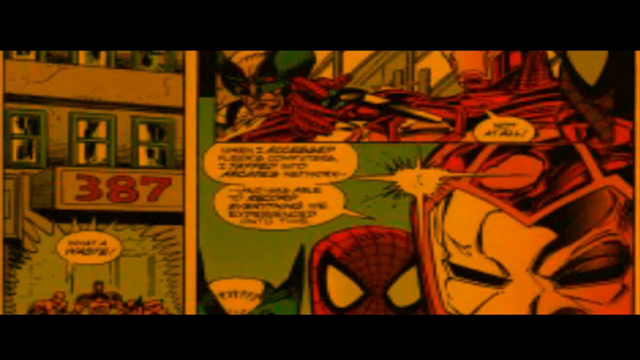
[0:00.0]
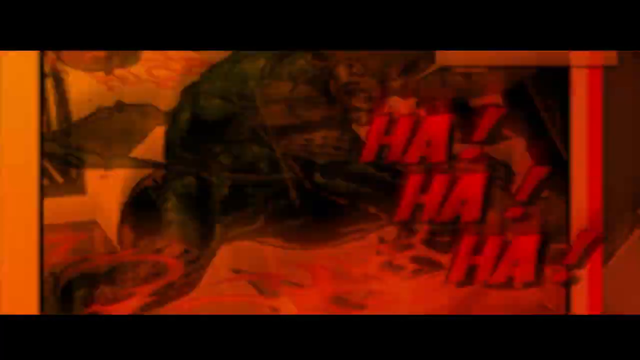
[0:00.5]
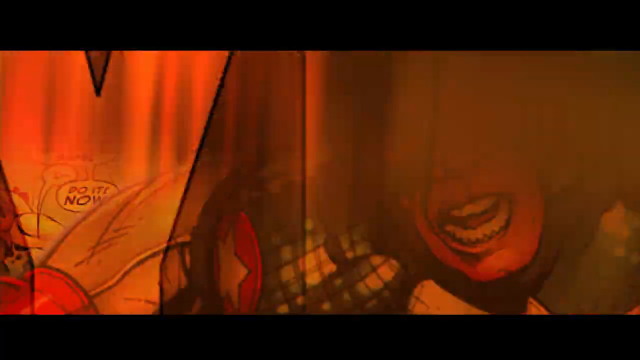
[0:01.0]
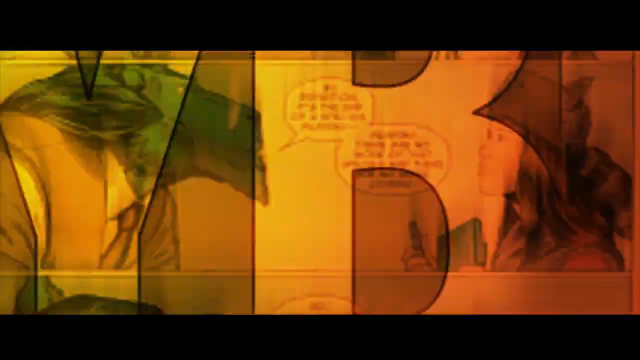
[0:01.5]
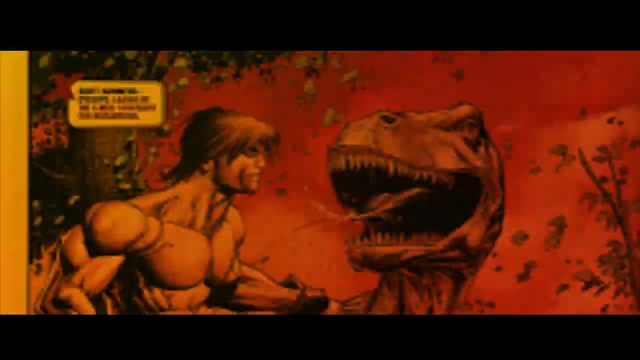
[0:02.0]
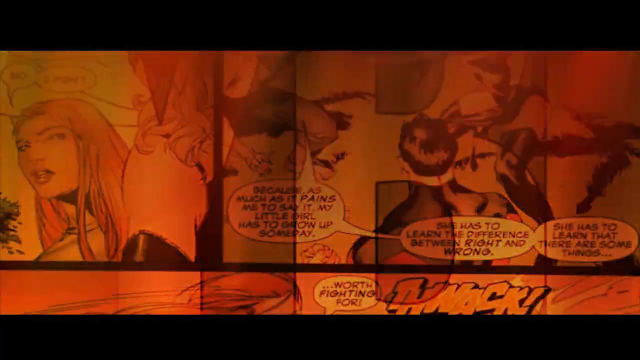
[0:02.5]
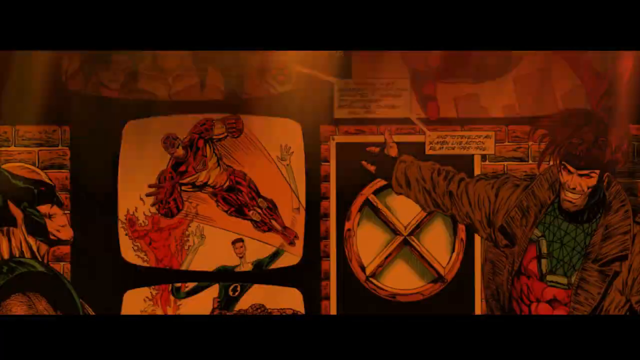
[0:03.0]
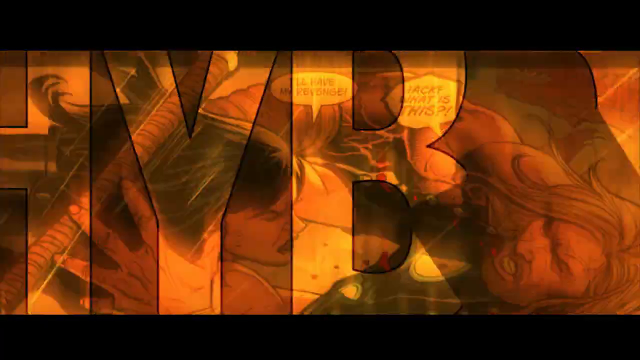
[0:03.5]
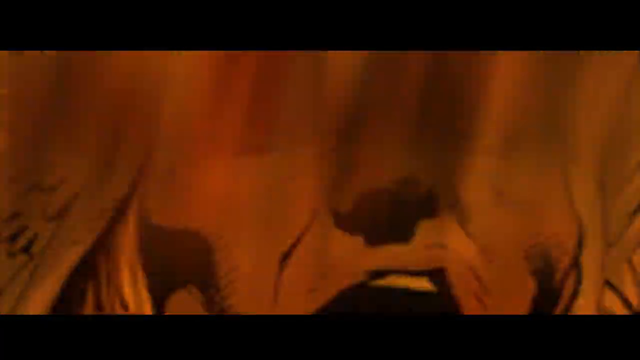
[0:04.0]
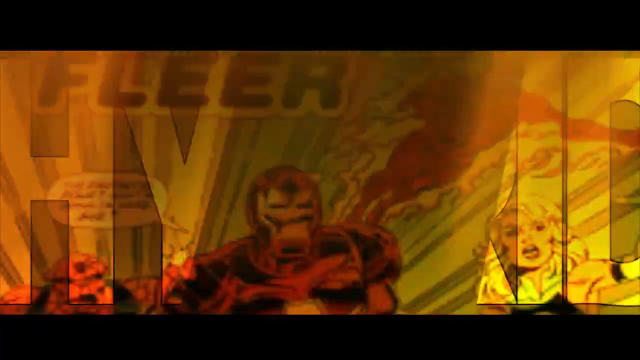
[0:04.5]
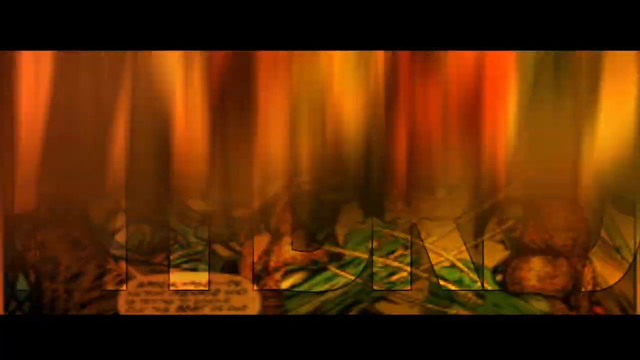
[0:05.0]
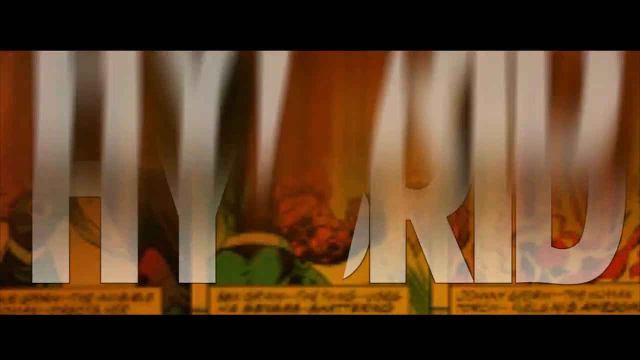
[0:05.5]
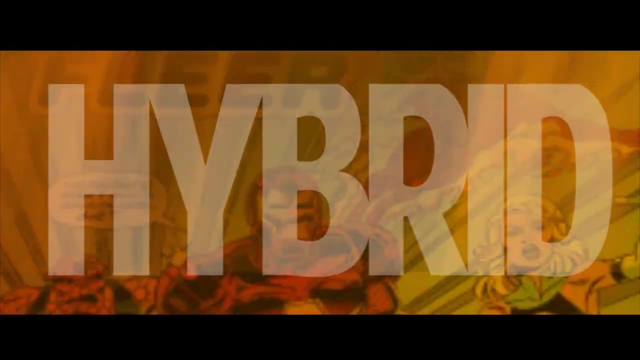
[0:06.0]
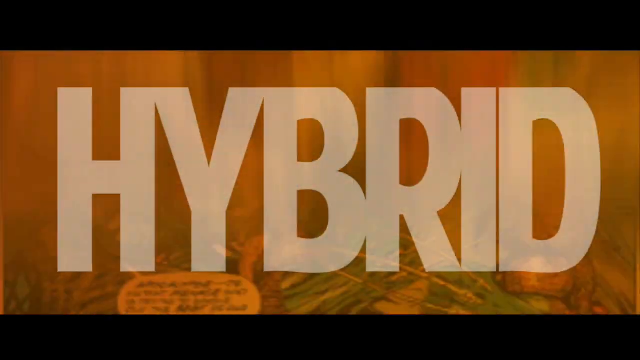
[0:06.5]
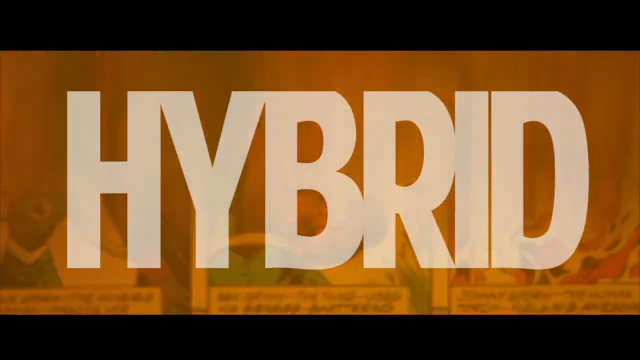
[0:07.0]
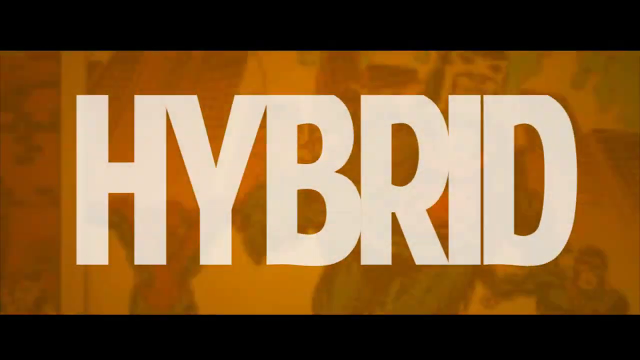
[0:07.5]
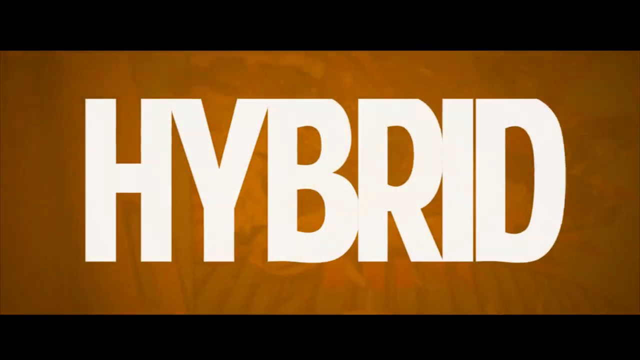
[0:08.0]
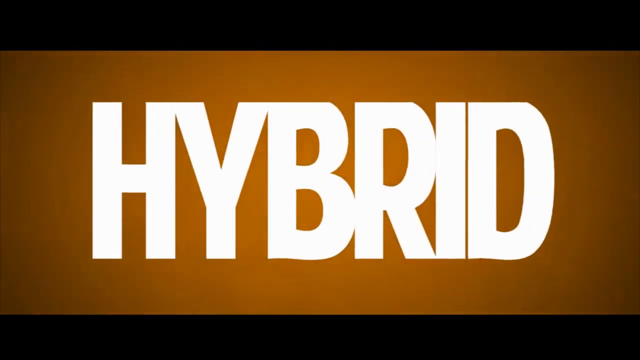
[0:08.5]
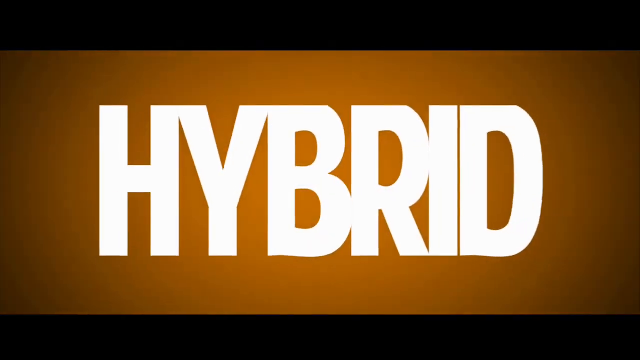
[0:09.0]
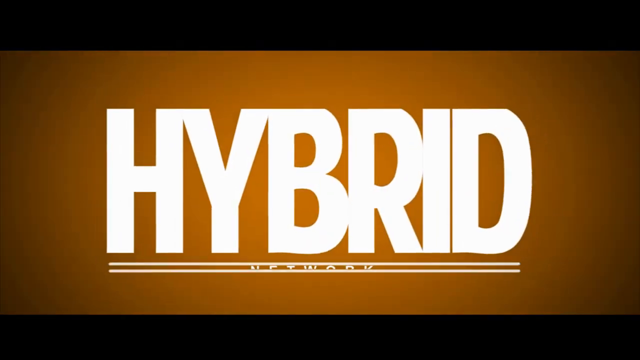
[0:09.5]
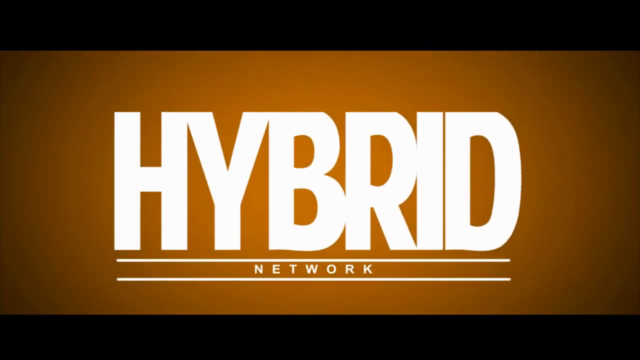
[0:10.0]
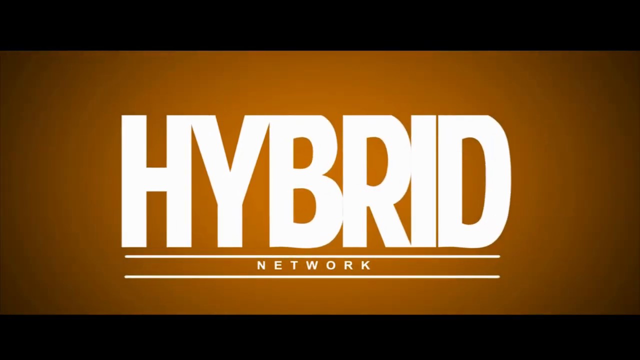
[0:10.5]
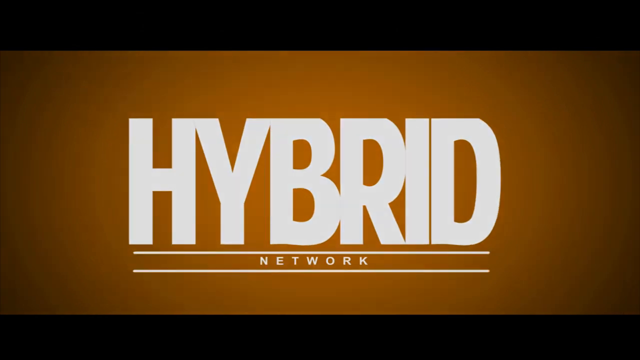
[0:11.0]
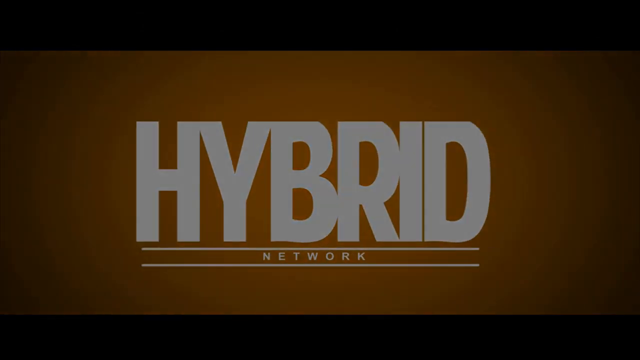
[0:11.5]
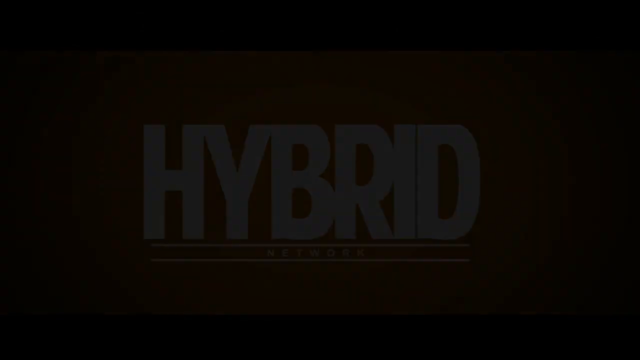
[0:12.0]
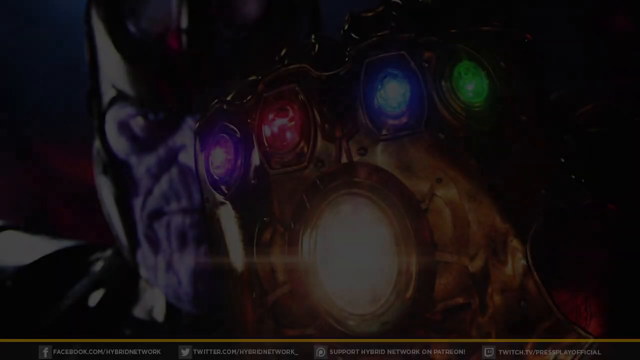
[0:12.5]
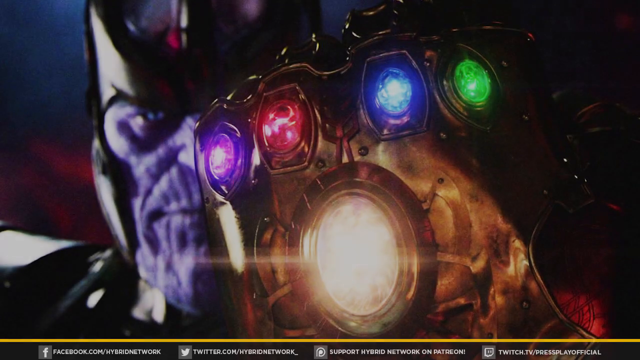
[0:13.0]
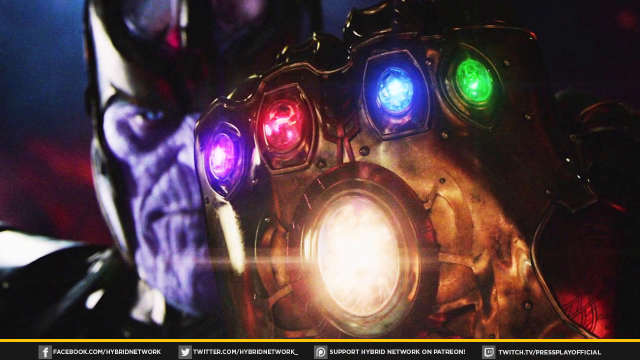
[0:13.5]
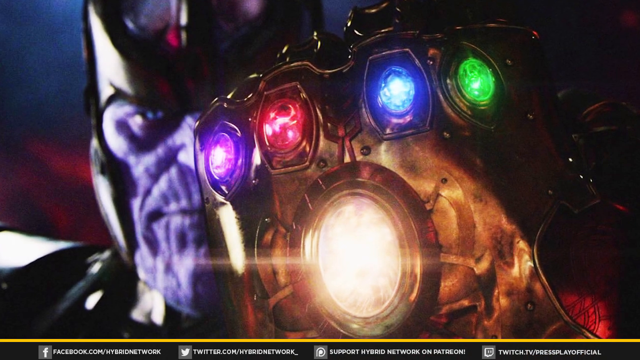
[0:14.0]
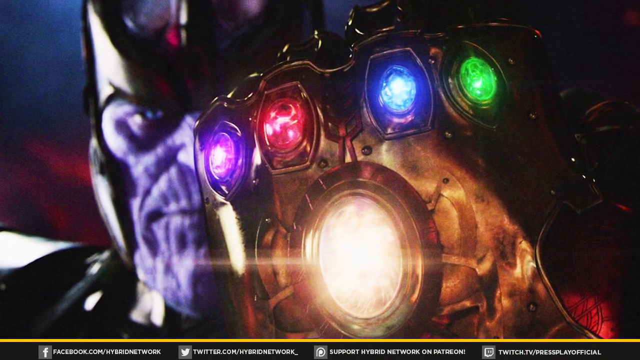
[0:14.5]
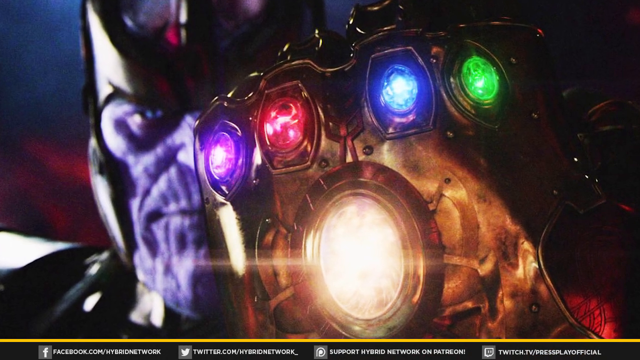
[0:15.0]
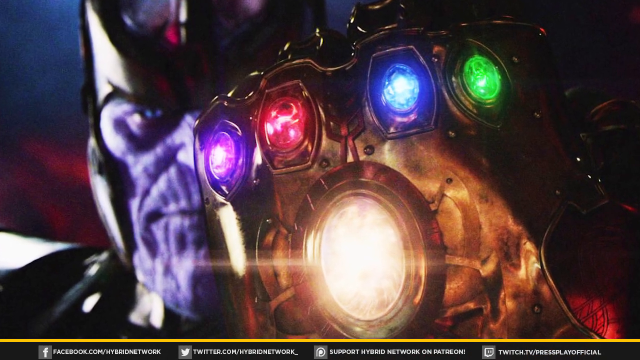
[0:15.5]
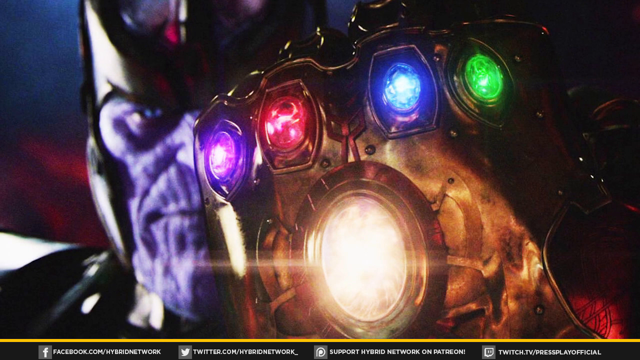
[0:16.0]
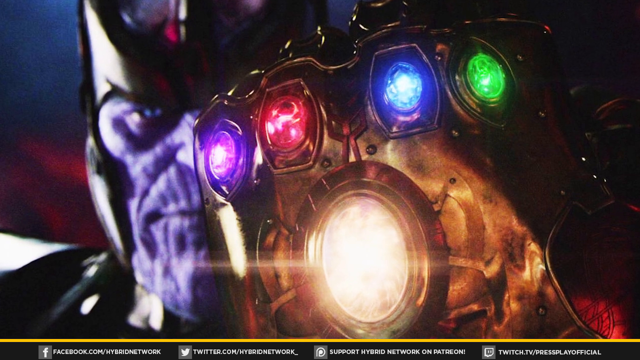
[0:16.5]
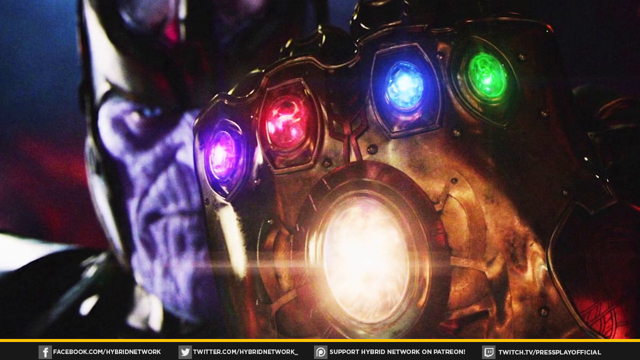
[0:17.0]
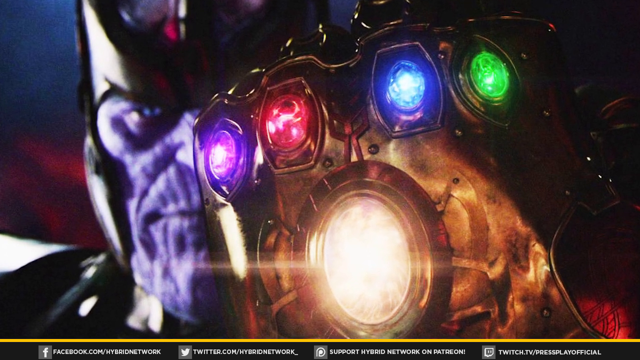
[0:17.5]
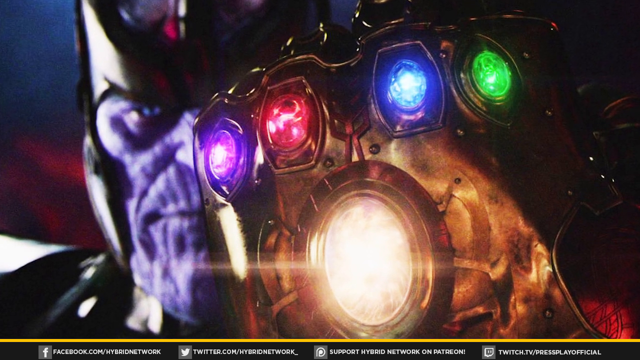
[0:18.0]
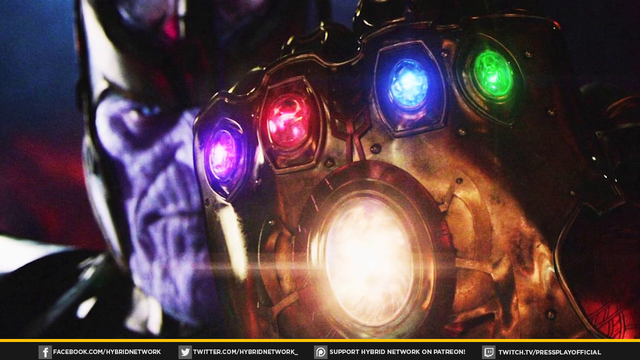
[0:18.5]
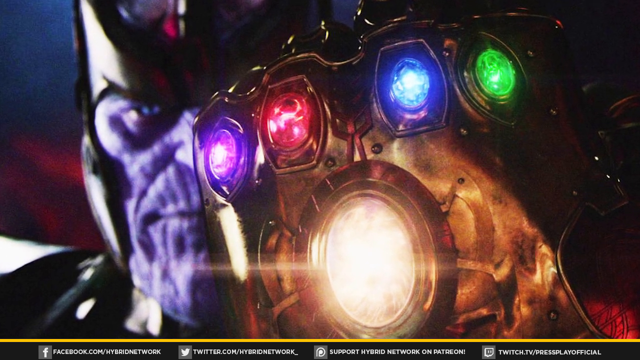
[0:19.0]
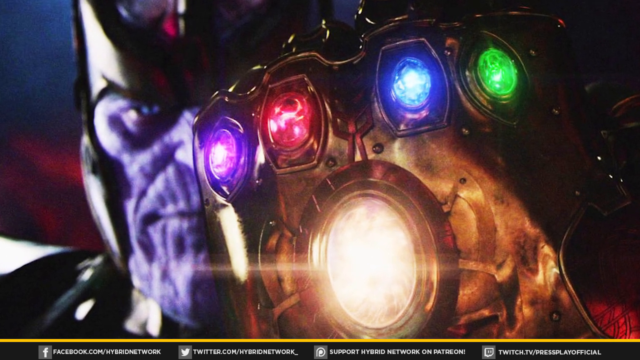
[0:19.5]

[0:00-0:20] The video appears to be about comic books. It opens with a very rapid flip through comics, showing Spider-Man comics, various other comic book heroes and other comic book IP, against what is kind of a goldish background. The view then kind of zooms out as the word "hybrid" appears on screen in very large white type and kind of pushes into the background. The word "network" appears beneath it, so the screen reads "hybrid network". This fades to black, and then a giant purple monstrous creature wearing a black helmet appears in the center of the frame, with some red and blue coloring in the background. The creature holds a device with a purple circle, a red circle, a blue circle and a green circle, with a kind of golden glowing ring beneath them. The shot lingers on this image for quite some time.